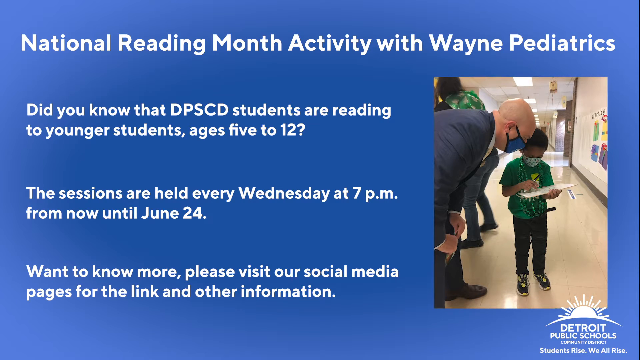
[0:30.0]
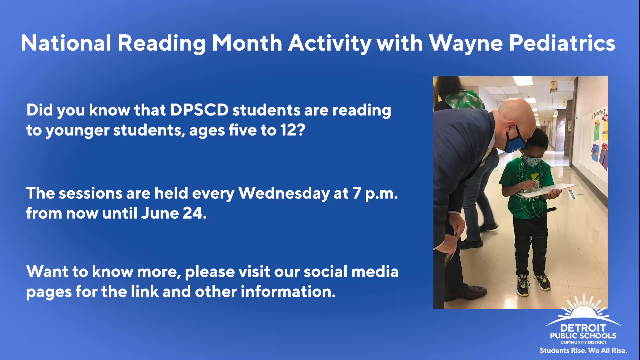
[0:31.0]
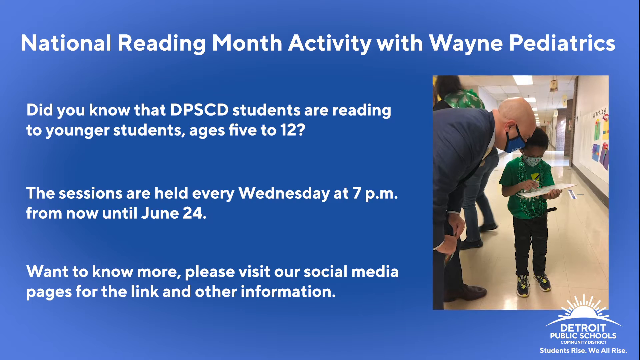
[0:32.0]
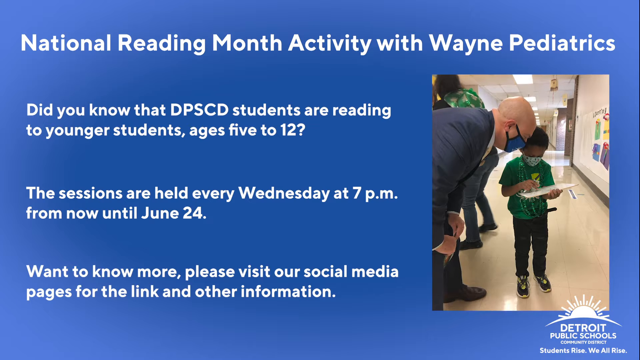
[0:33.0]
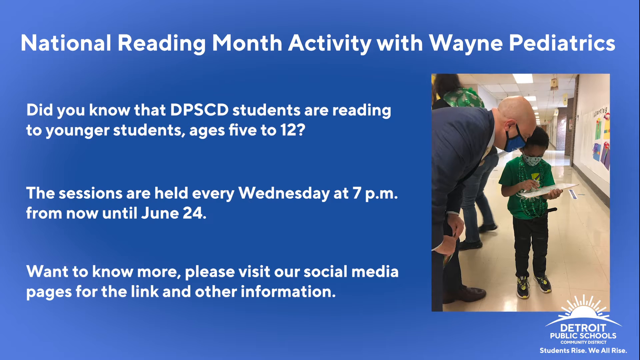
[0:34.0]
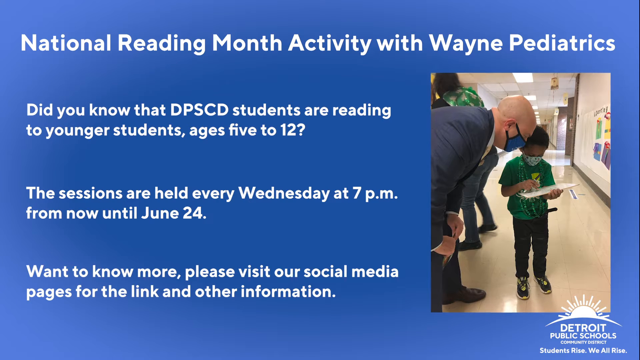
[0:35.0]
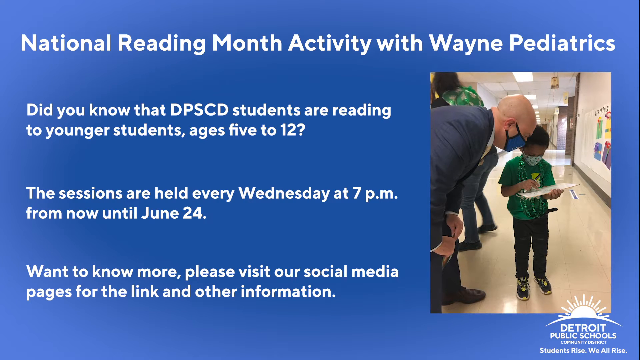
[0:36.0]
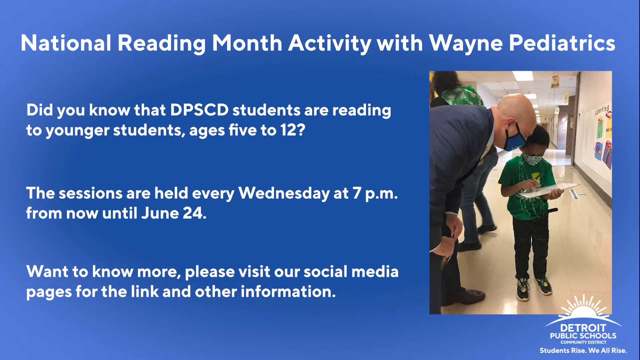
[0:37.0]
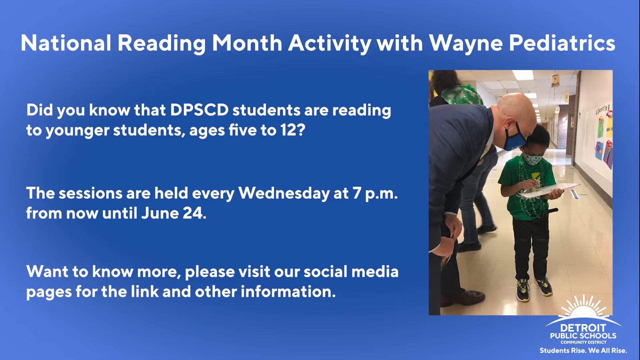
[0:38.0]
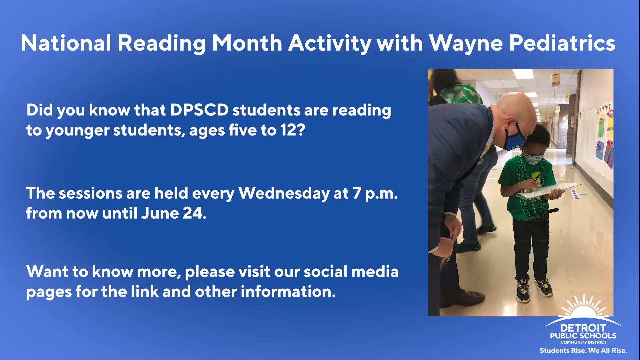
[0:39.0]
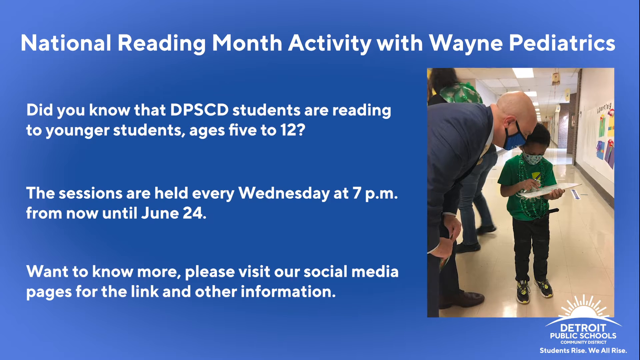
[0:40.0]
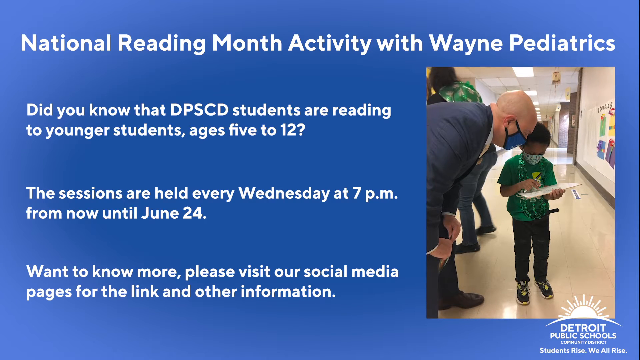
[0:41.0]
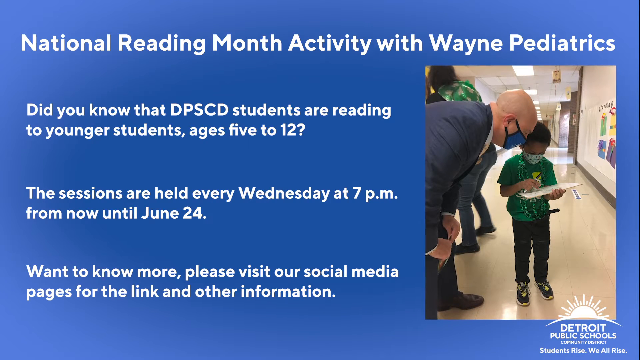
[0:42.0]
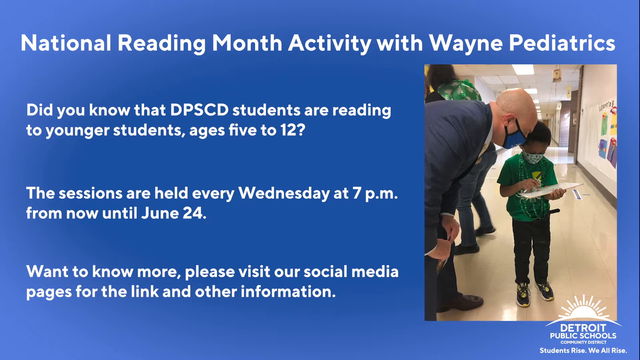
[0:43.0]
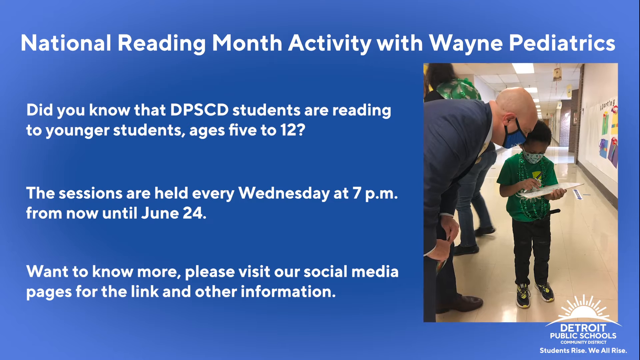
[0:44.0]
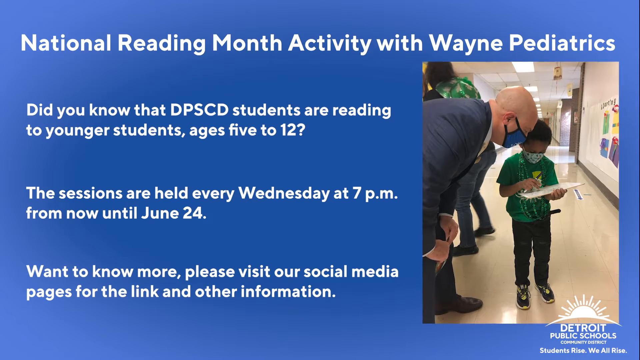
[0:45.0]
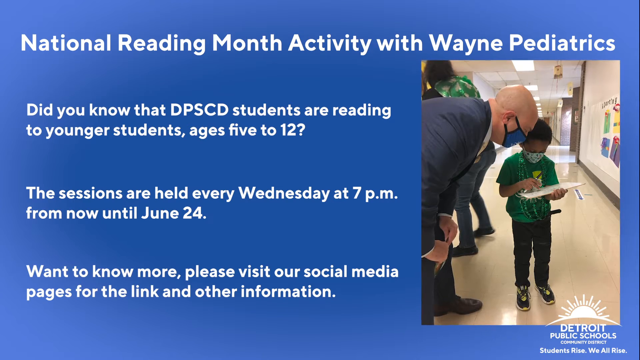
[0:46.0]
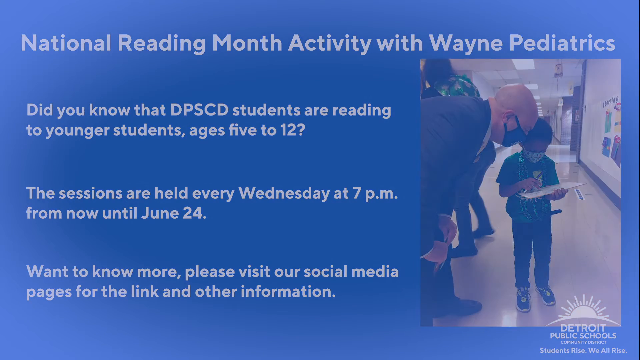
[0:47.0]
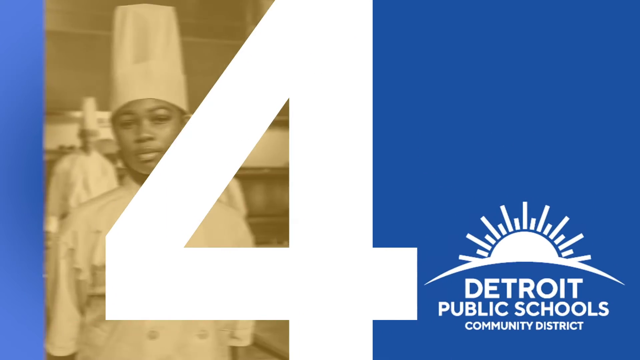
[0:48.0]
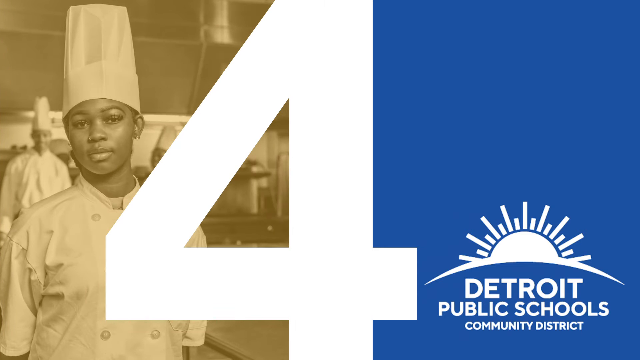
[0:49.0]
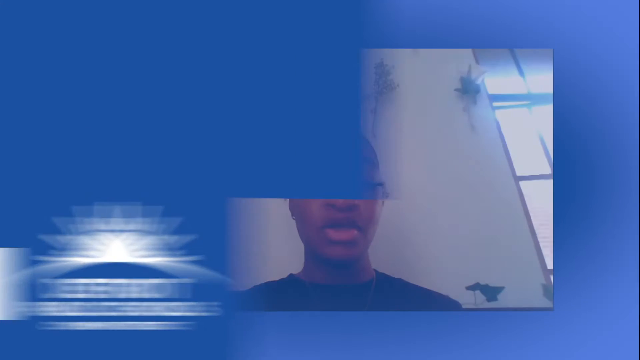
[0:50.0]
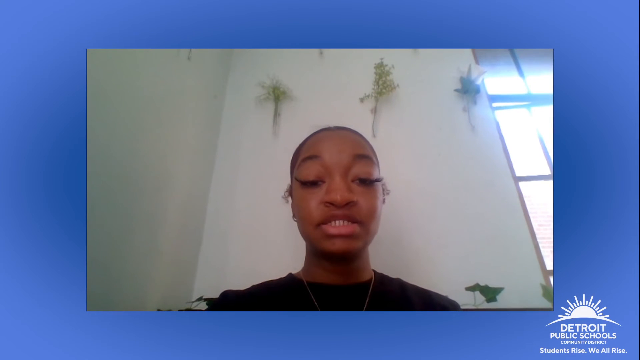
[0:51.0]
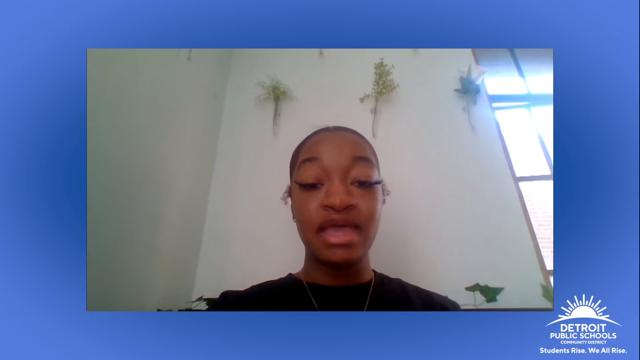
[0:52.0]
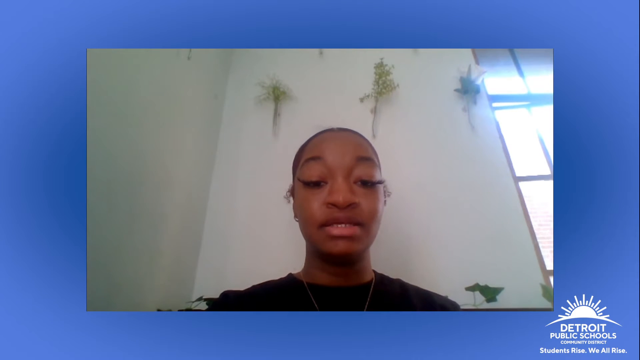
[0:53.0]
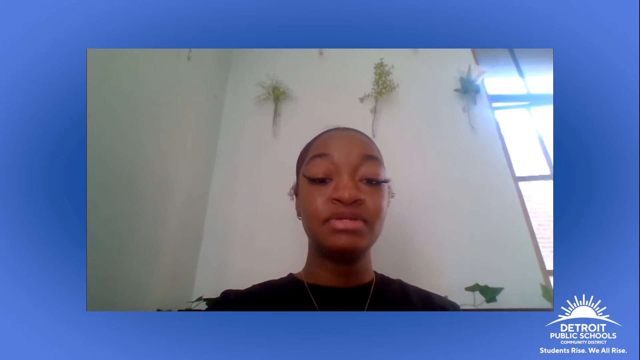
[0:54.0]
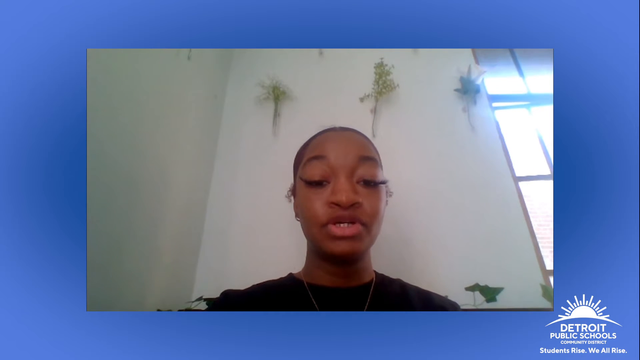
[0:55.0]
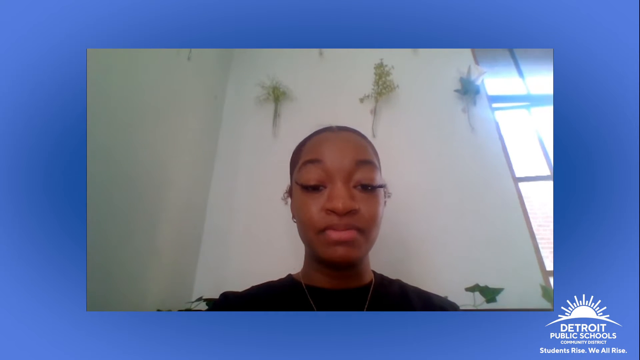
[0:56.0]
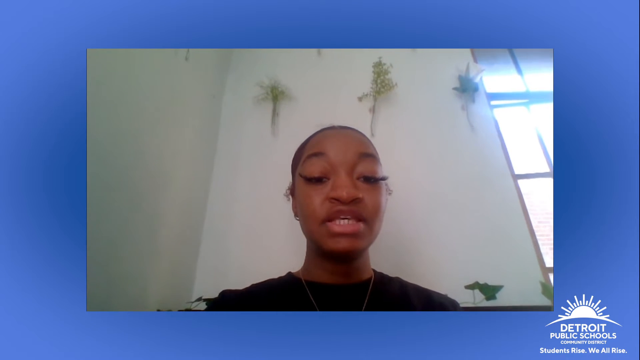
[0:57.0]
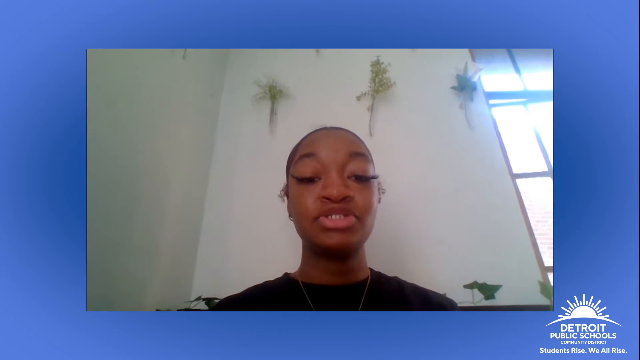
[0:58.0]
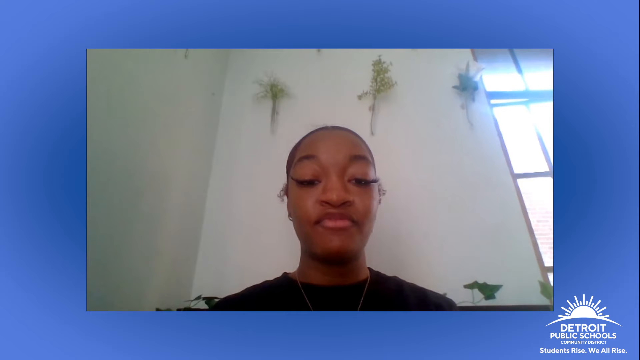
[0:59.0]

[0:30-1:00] The same reading-activity page stays on screen for several more seconds, then fades into a page with half a picture of a young person who appears to be wearing a chef's outfit; the picture looks old-timey and vintage. A big white 4 is in the middle of the page, and to the right of the 4 it is all blue, with a sunshine logo at the bottom right and "Detroit Public Schools Community District" at the bottom. The video then cuts back to the young woman from the beginning, filmed by her own camera as she speaks into it. She is in a room with white walls, with what appear to be different plants behind her and a window to her right. In the bottom right of the screen is still the sunshine logo with "Detroit Public Schools" at the bottom.